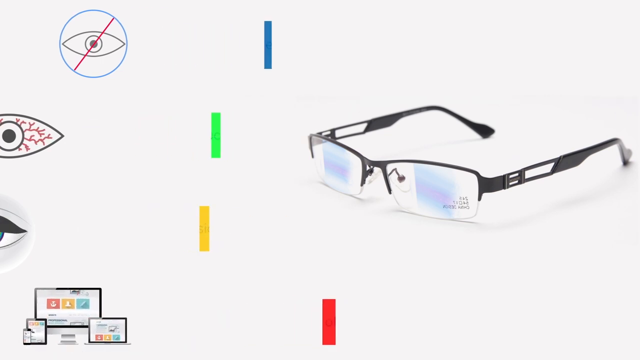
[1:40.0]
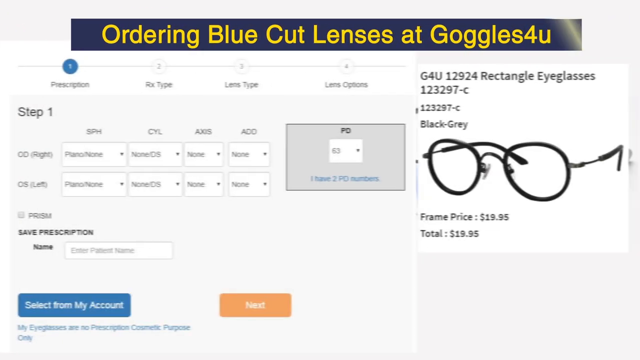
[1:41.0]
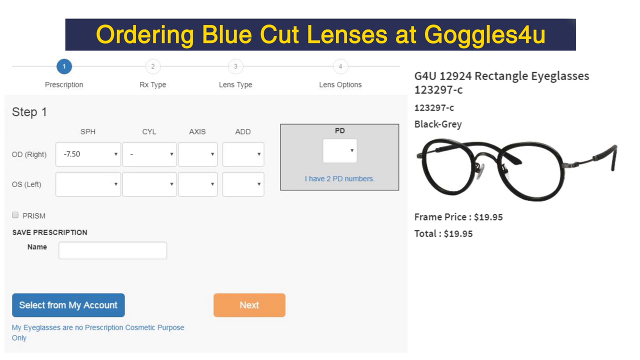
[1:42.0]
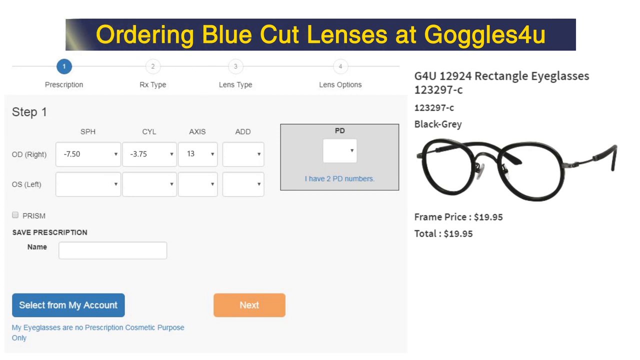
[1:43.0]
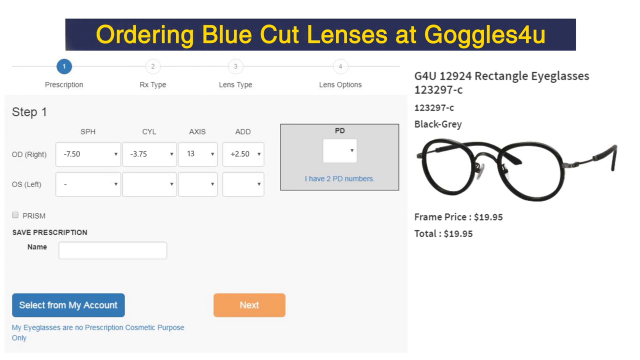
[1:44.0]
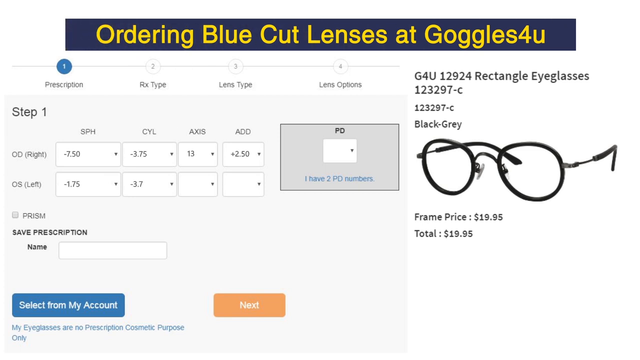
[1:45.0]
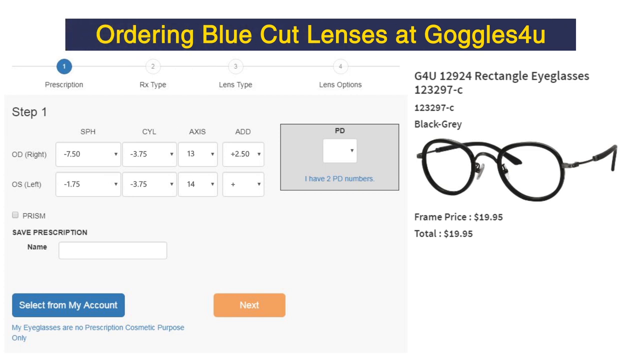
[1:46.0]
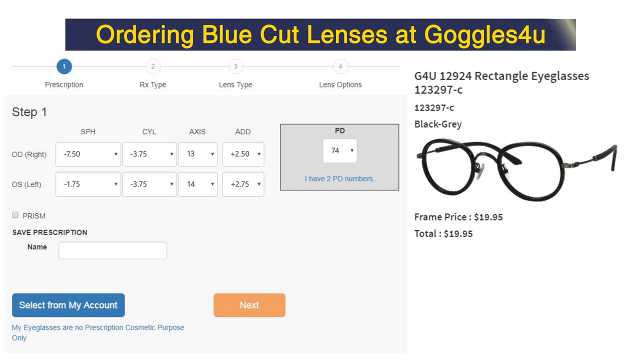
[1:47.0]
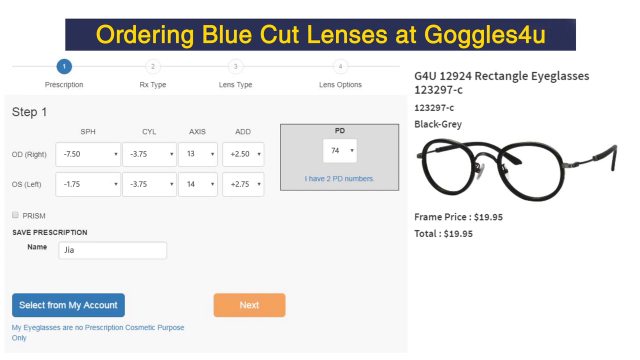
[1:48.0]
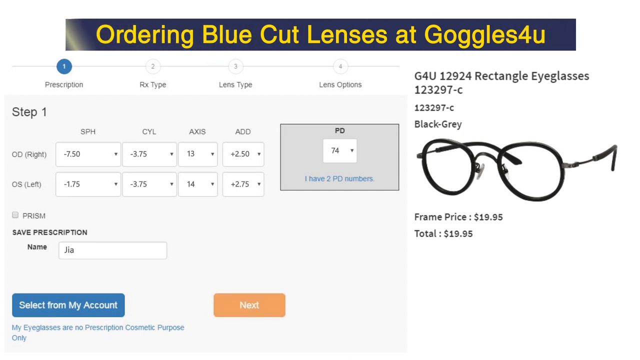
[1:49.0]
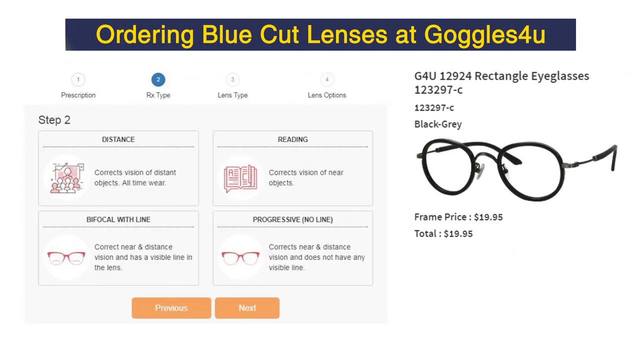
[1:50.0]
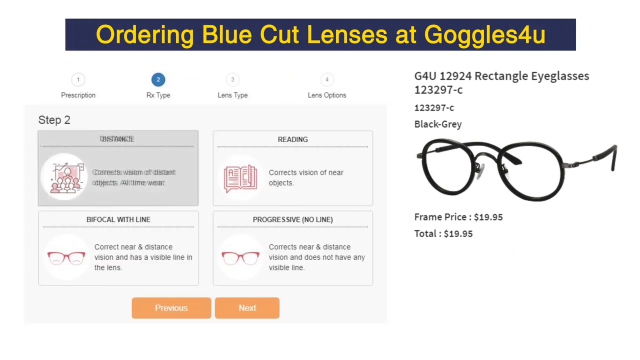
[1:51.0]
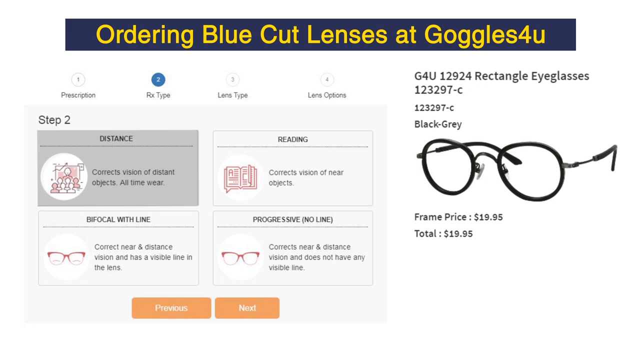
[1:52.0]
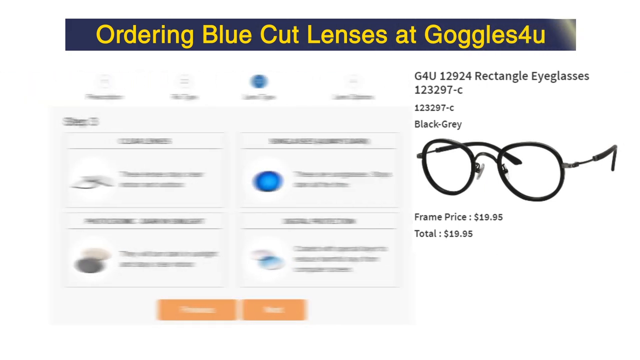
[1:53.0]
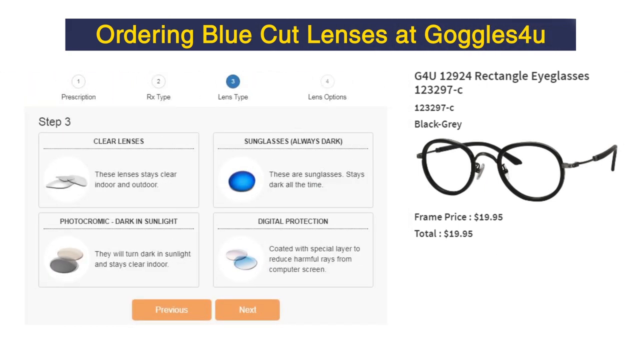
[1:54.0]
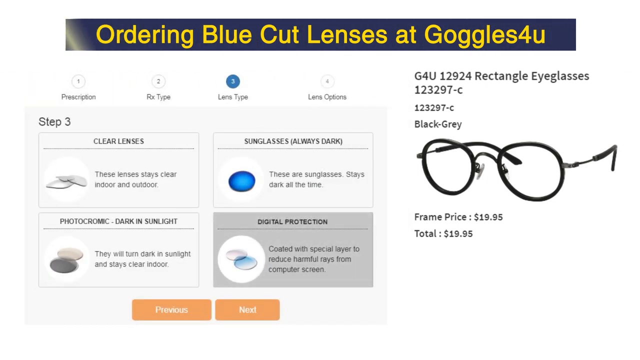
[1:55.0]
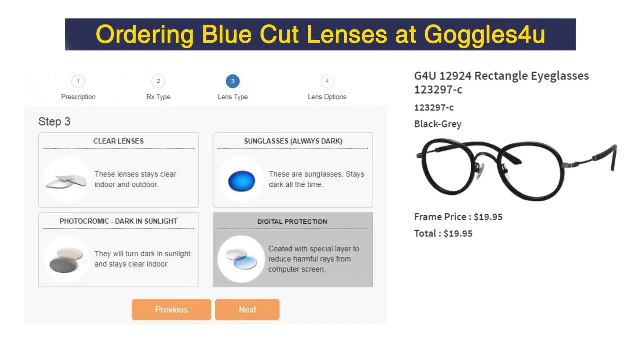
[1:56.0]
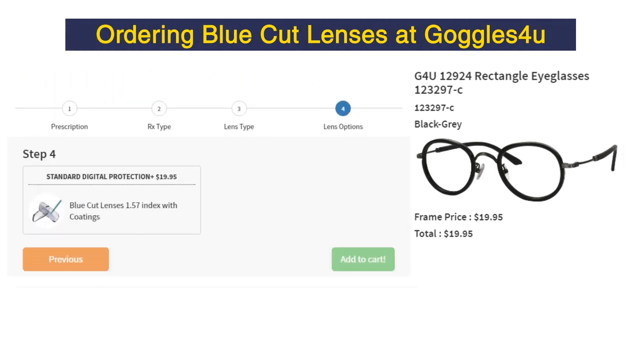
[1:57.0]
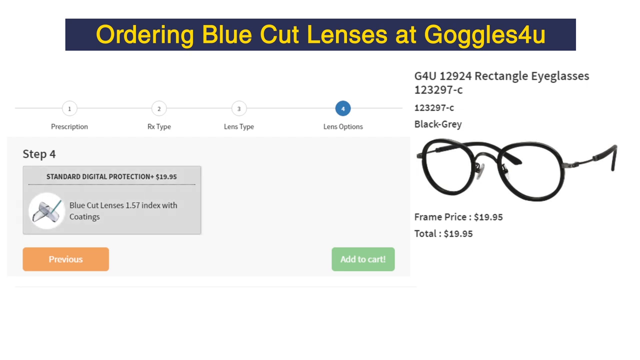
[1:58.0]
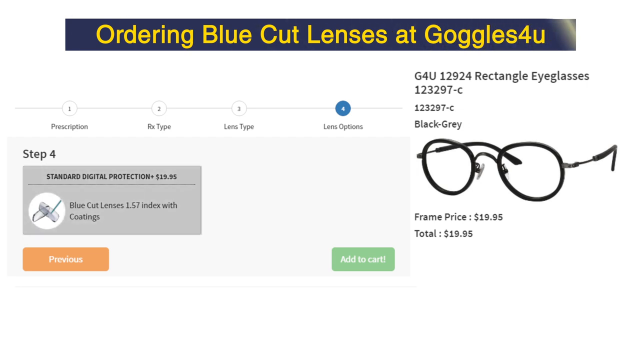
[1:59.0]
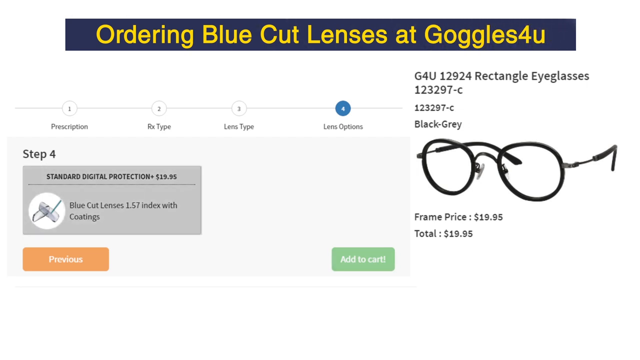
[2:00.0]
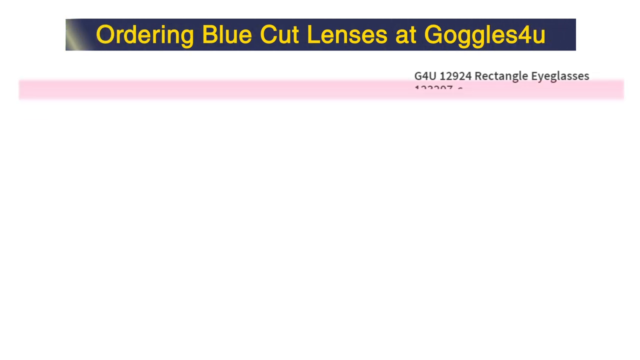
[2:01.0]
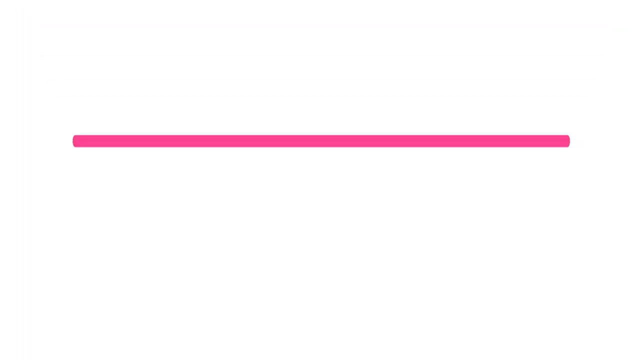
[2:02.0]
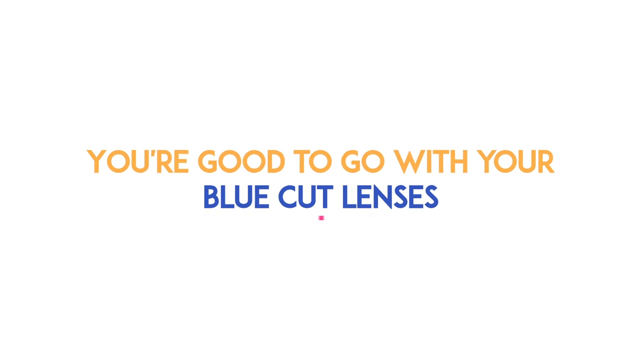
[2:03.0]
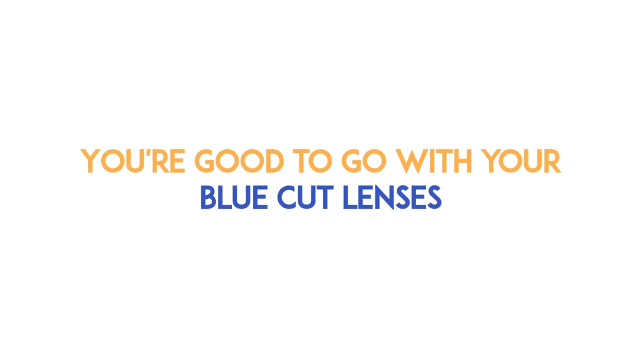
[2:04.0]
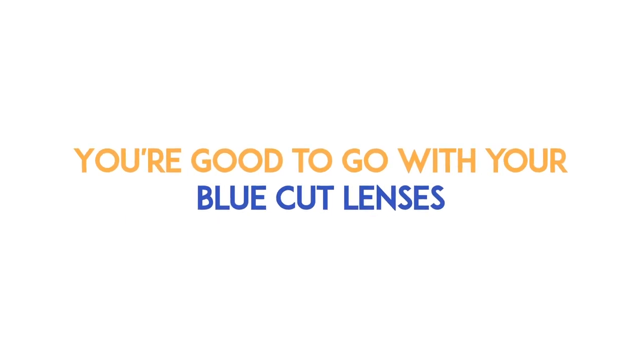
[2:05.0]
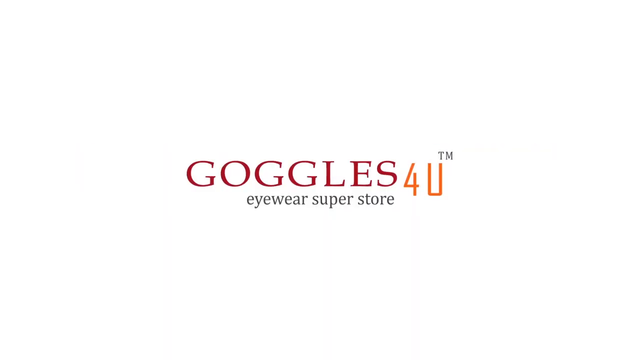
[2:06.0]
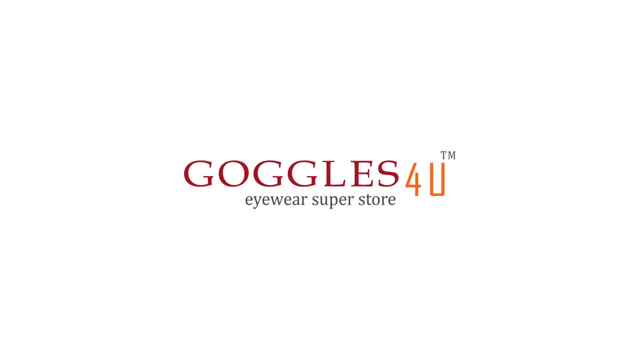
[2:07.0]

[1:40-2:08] An animated screen shows a pair of square-framed eyewear whose lenses have what seem like blue patches on them, illustrating protection on the lens. The screen then changes to a page for ordering eyeglasses, written in yellow text on a black rectangular background. At the top, it says "Ordering blue-cut lenses at Goggles4U". Below that is step one, with entry fields for the eyewear prescription, including sphere, cylinder, axis and add. On the right side are the selected frames, which are round, with the name and model of the frames written above and the price, $19.95, below. The prescription autofills, showing numbers in each entry field. The screen then transitions to show additional data being selected, and digital protection is selected as one of the options. At step four, the add to cart button is clicked. The video ends with a white screen with yellow and blue text reading "you are good to go with your Blue cut lenses".